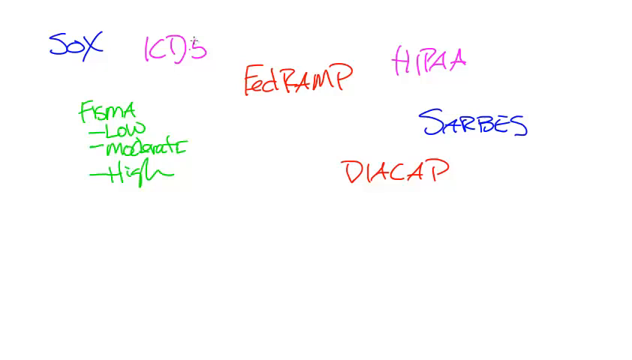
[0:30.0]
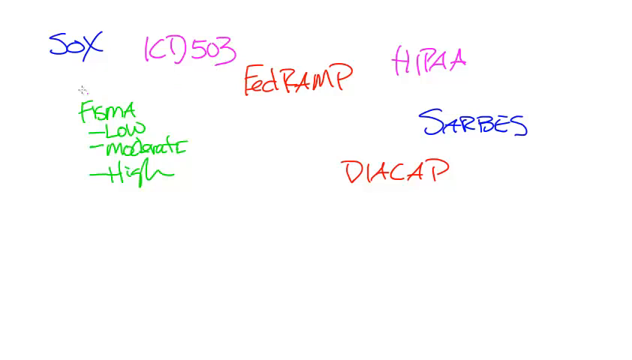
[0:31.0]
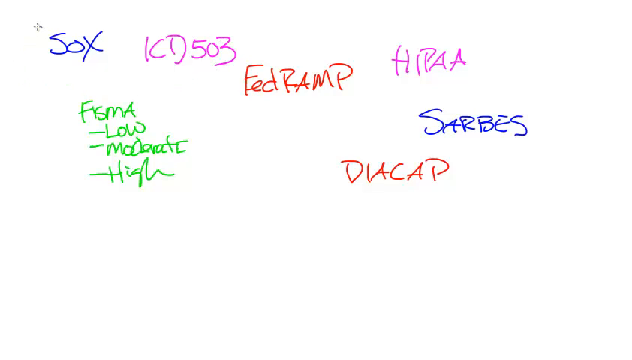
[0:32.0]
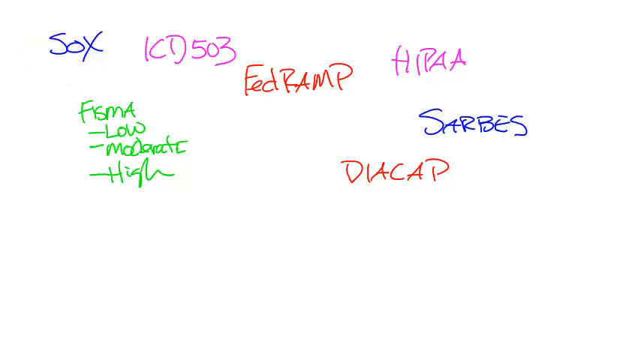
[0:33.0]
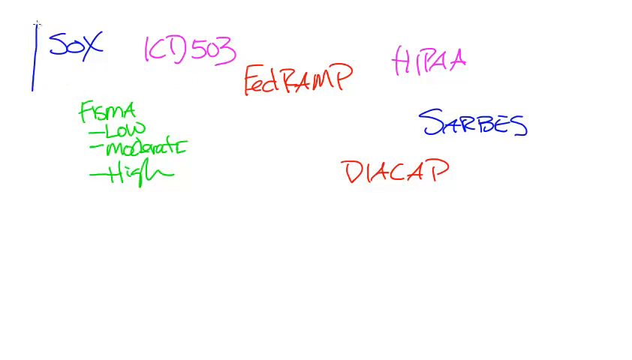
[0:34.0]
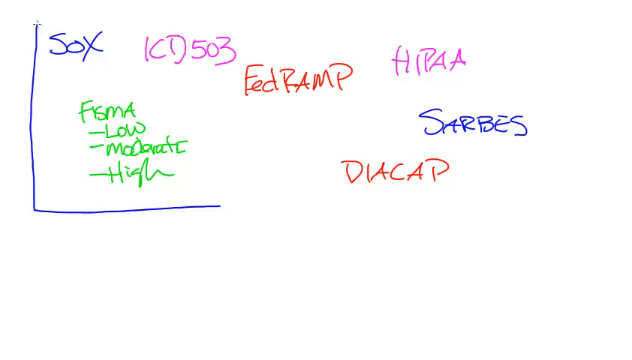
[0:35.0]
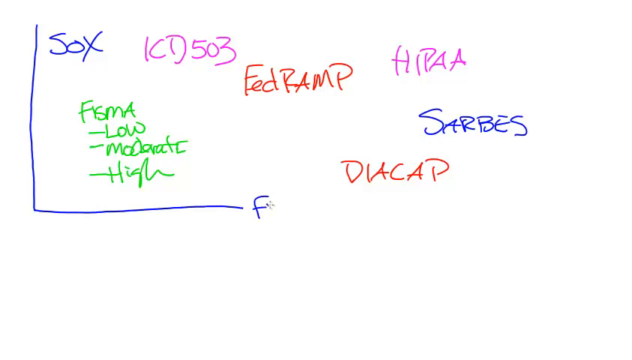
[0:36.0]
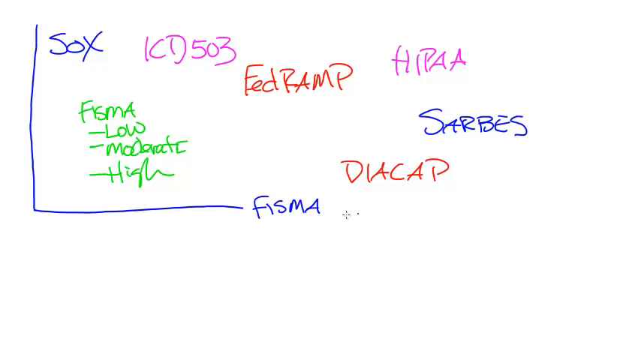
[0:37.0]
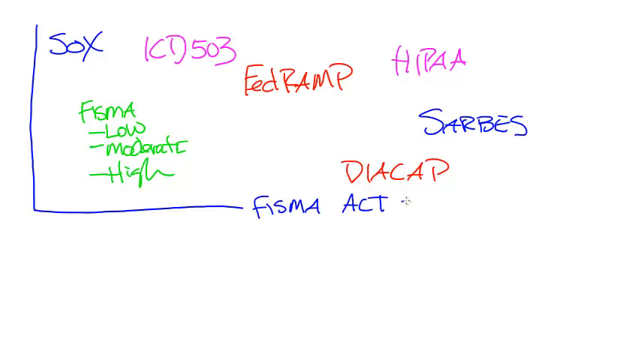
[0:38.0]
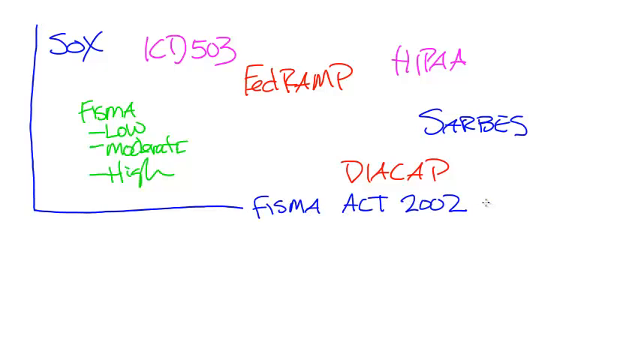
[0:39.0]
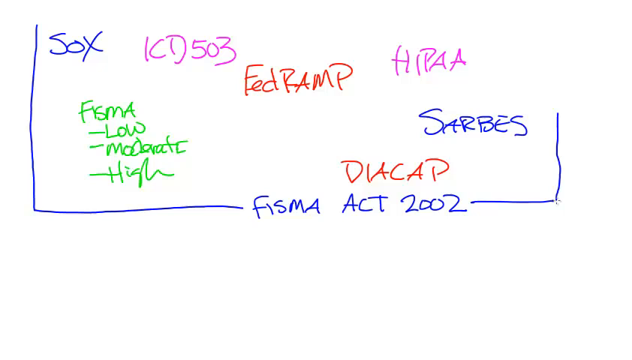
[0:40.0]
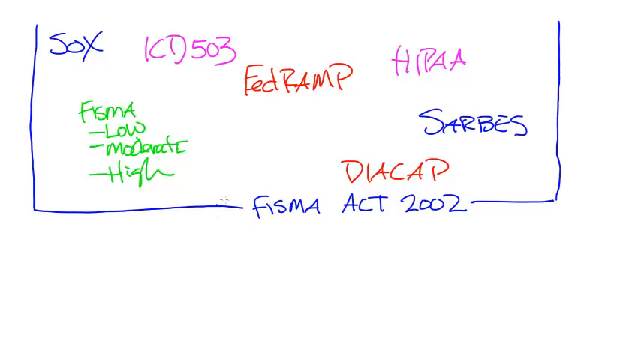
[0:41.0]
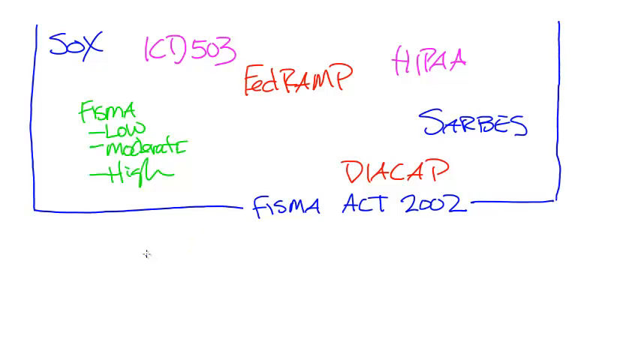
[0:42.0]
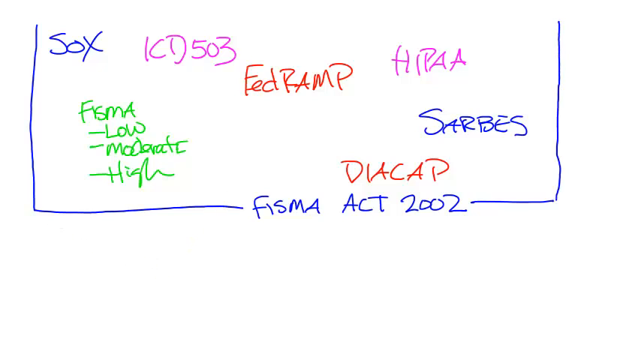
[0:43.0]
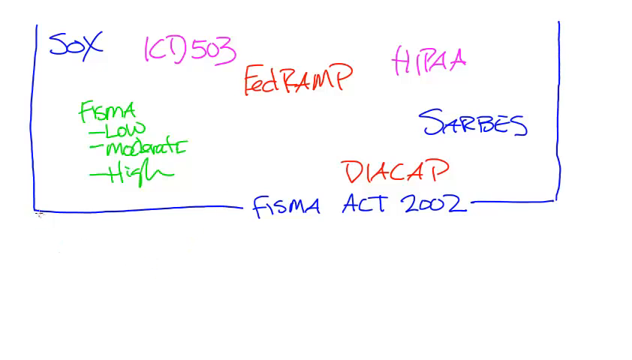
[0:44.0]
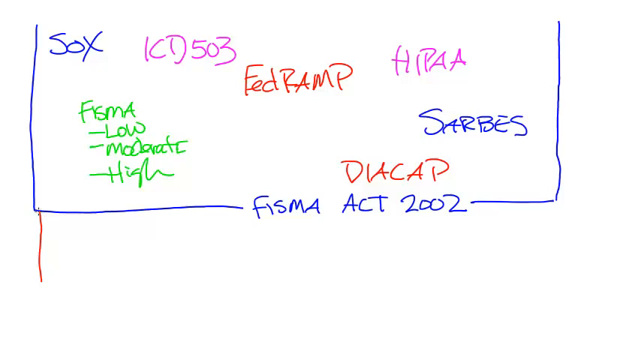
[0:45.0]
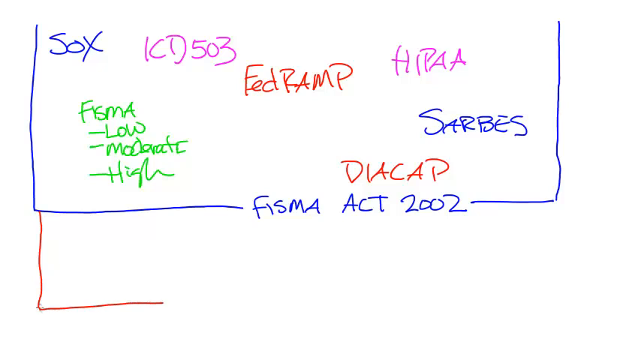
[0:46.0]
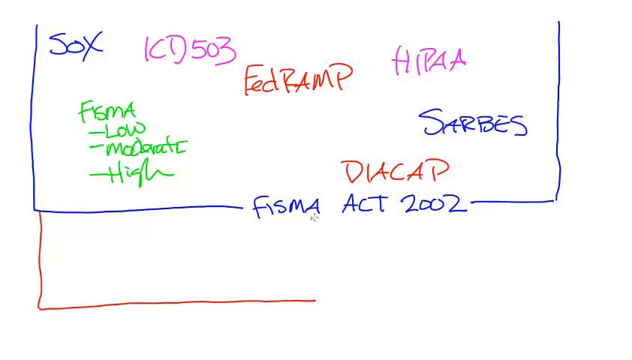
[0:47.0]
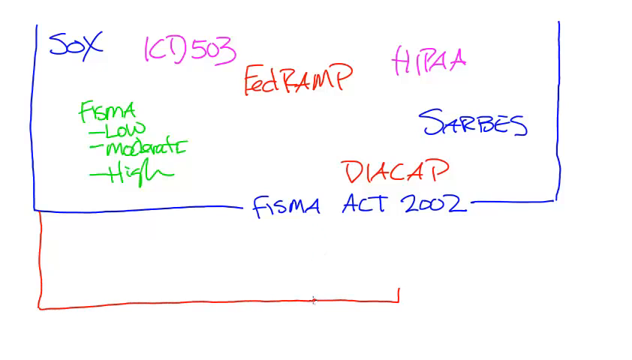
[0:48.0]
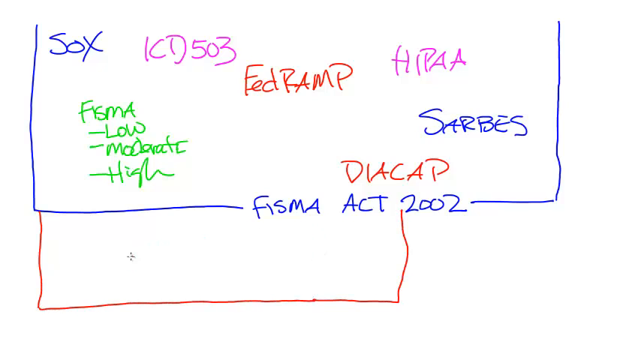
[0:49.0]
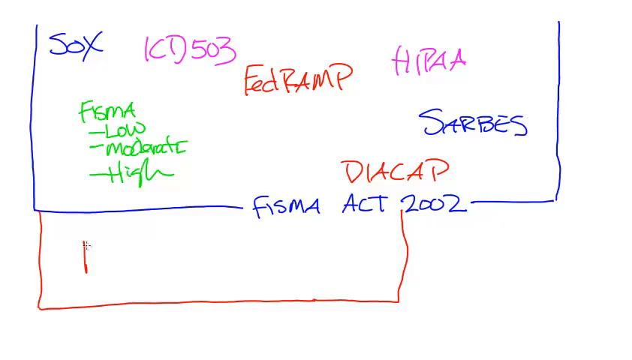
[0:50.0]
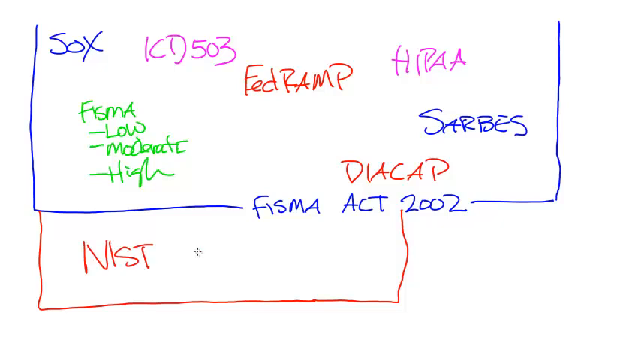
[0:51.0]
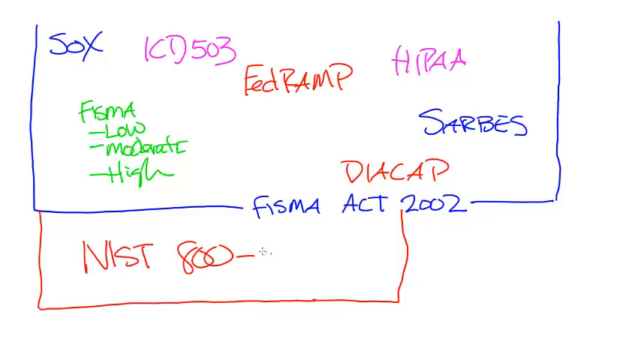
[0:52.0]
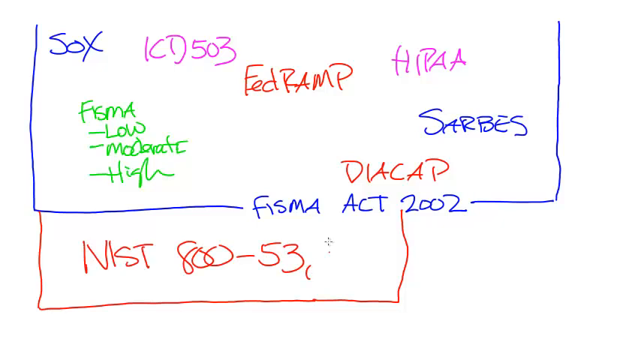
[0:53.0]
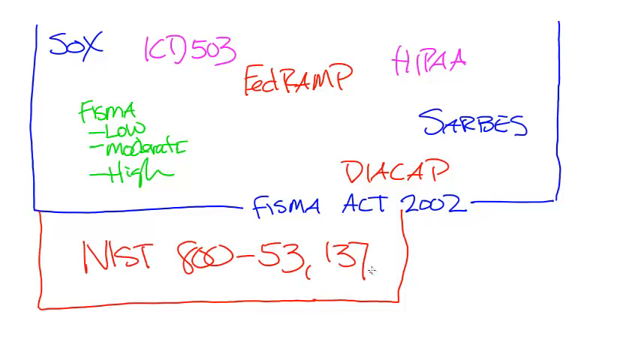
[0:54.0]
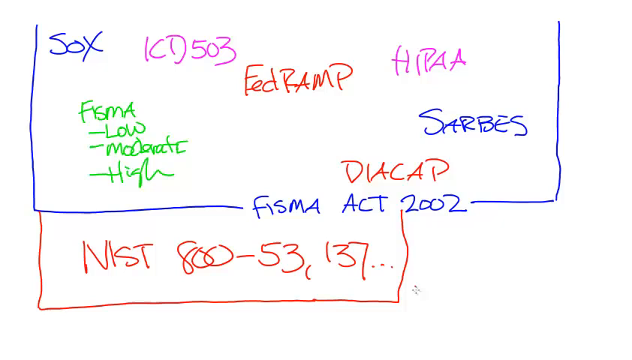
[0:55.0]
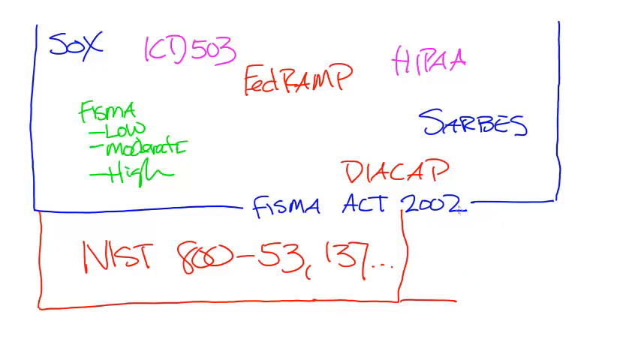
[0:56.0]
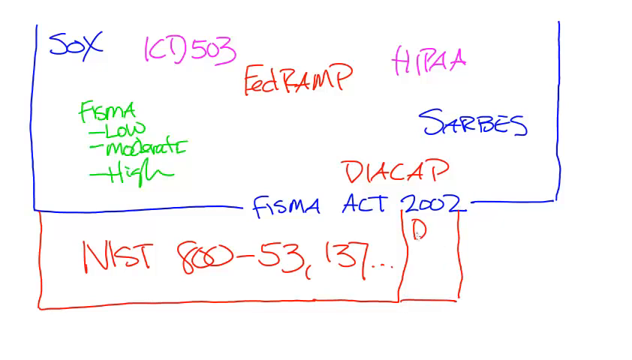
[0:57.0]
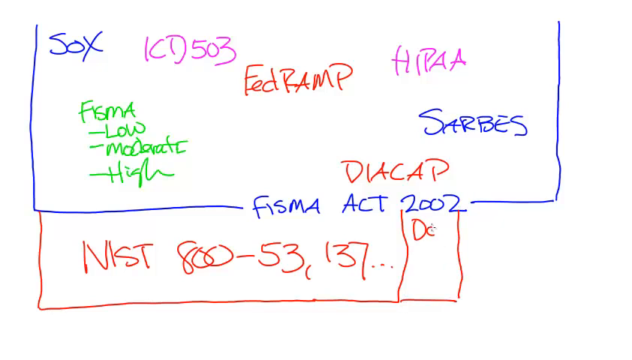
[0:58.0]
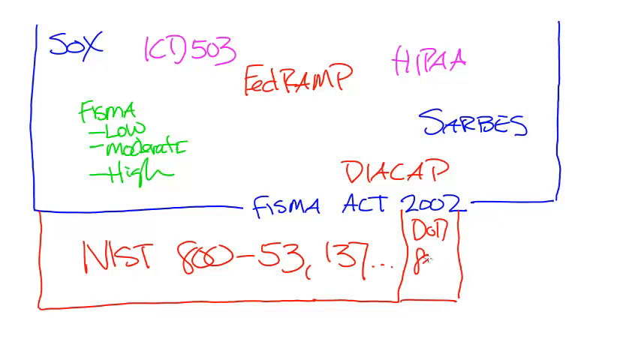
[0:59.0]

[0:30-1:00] The pointer keeps writing in a handwriting style, finishing "KD503" in purple on the upper left side of the screen. It then moves over "SOX" and draws a line down to about two-thirds of the way down the page, then right about a third of the way across the page, and writes "FISMA Act 2002". It continues the line the same distance in the other direction and then draws up the right side to the top of the page in blue. The pointer hovers over the bottom third of the screen, then goes to the bottom left corner of the blue lines and draws a red line down to the bottom of the screen, then to the right two-thirds of the way across the page, and then up. Moving left to the inside of the red box it just drew, it writes "NIST 800-53,137" in red text that fills the box. It then draws a small box to the right, connected to the bottom line, draws up to connect to the line above, and writes "DOD" and "8500" in the small box.